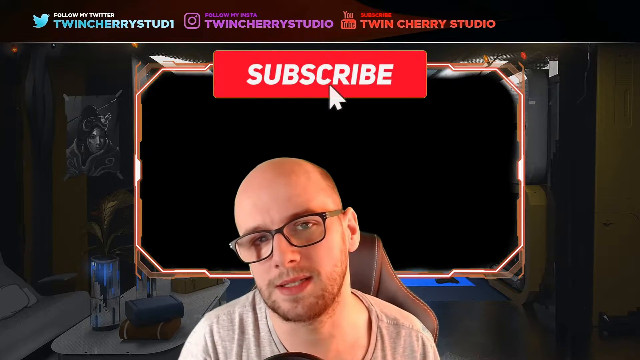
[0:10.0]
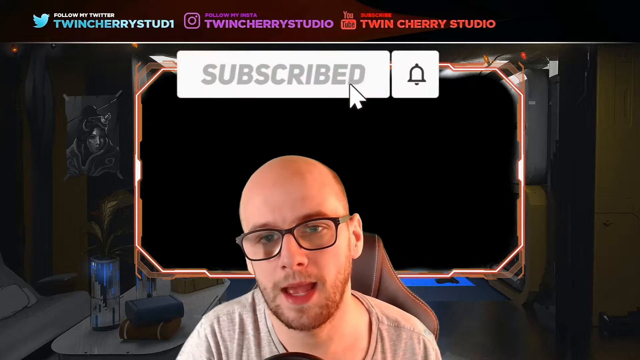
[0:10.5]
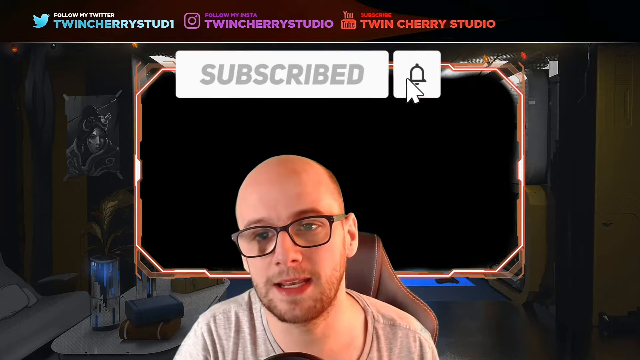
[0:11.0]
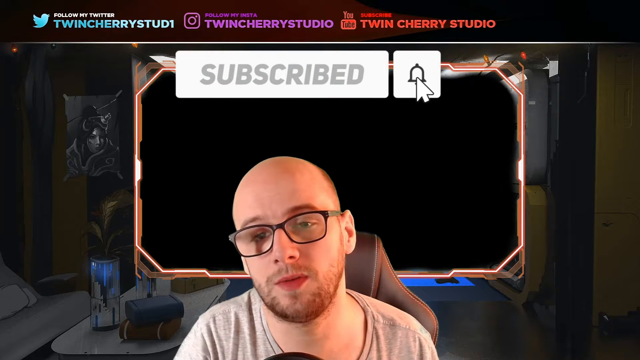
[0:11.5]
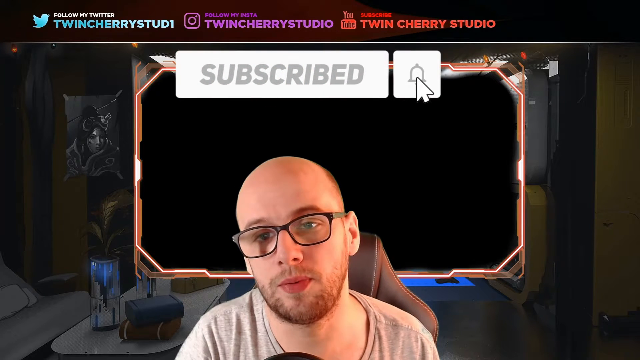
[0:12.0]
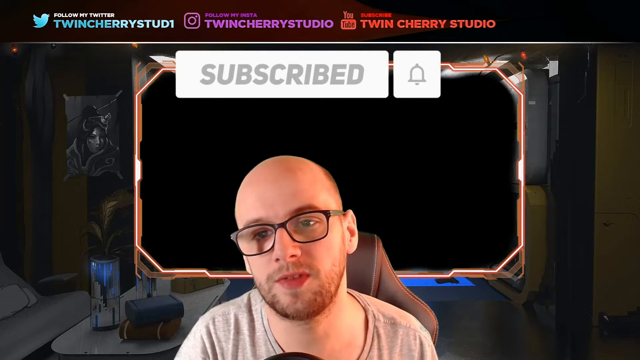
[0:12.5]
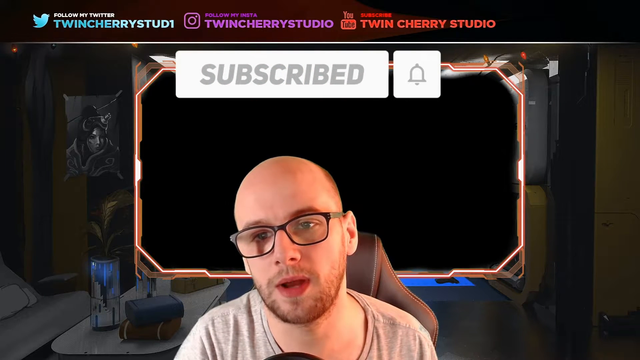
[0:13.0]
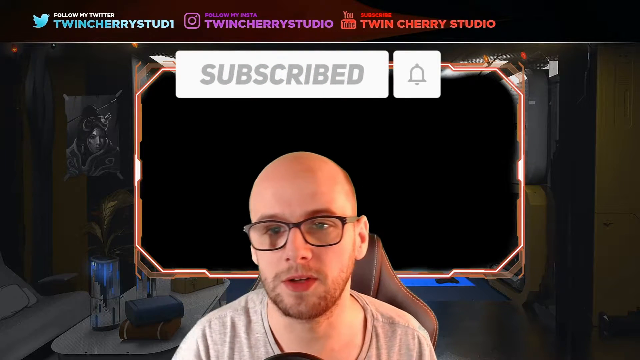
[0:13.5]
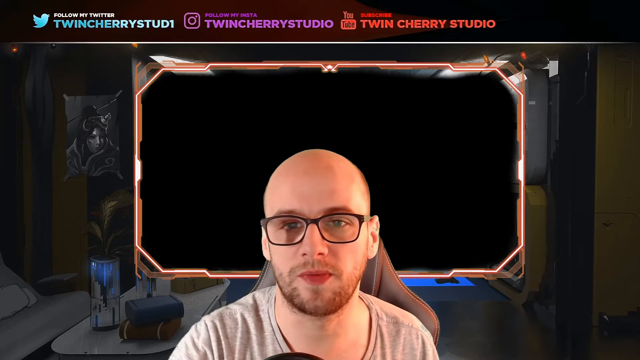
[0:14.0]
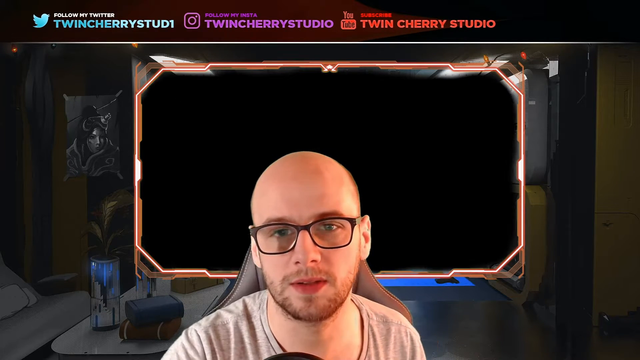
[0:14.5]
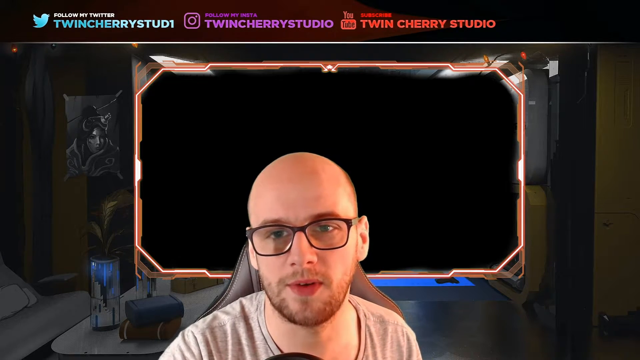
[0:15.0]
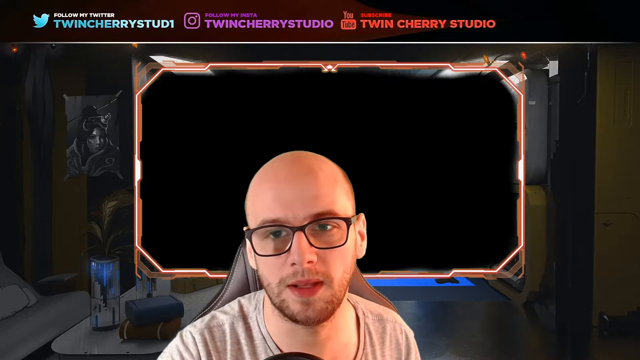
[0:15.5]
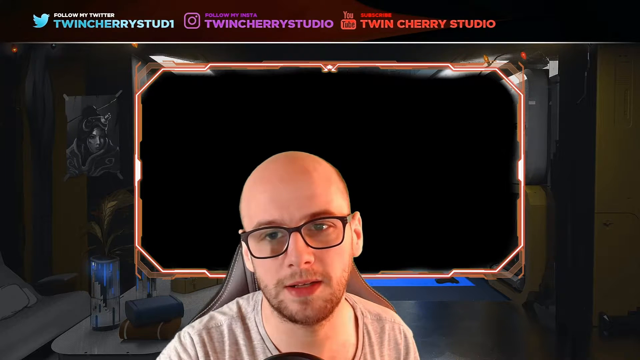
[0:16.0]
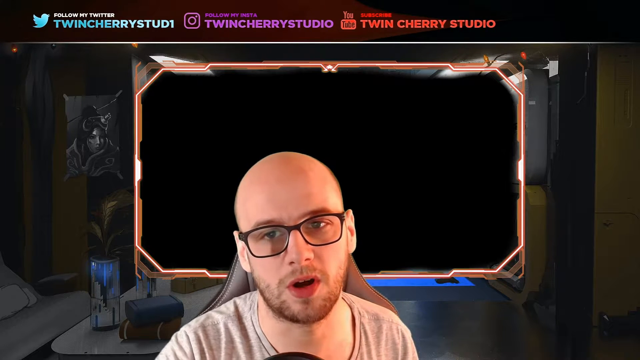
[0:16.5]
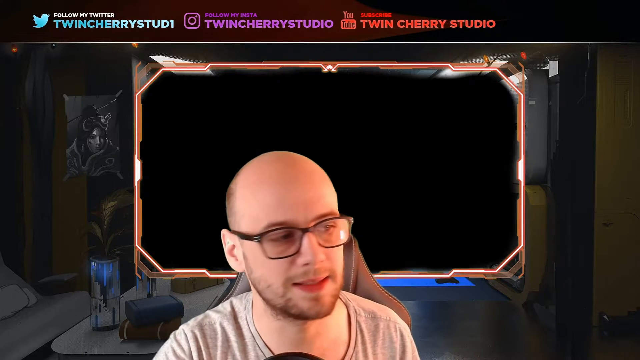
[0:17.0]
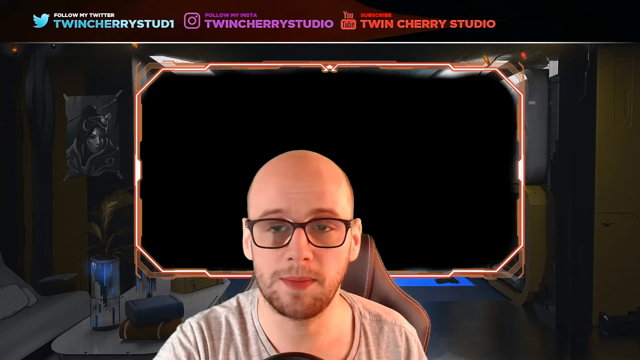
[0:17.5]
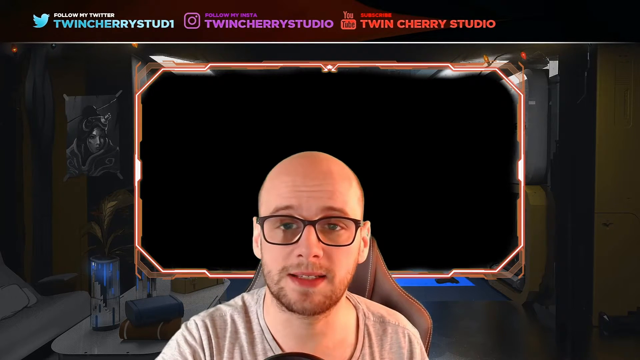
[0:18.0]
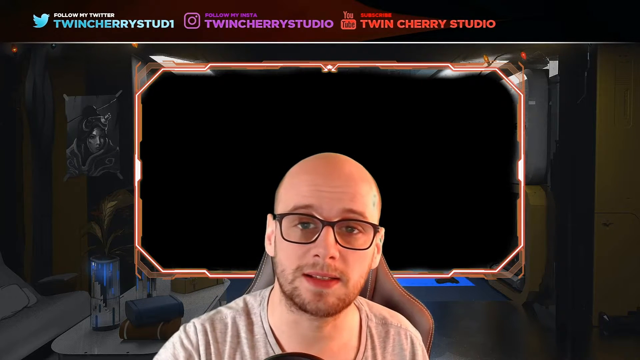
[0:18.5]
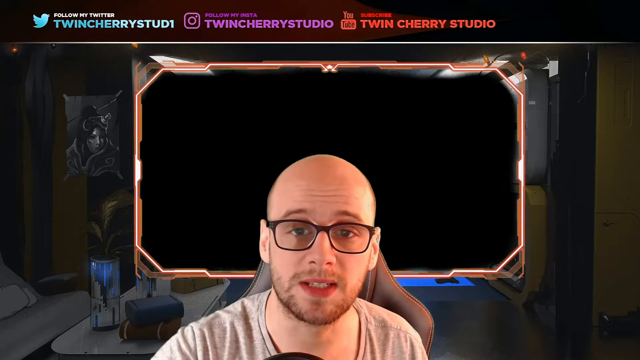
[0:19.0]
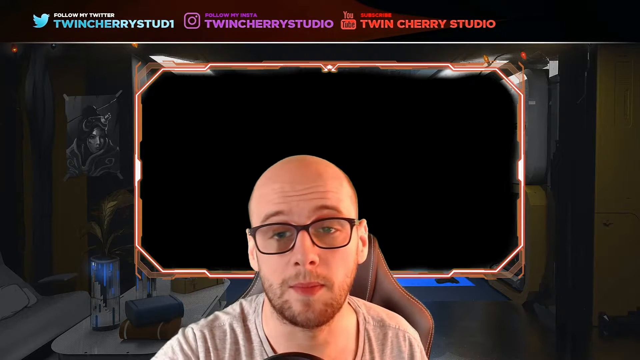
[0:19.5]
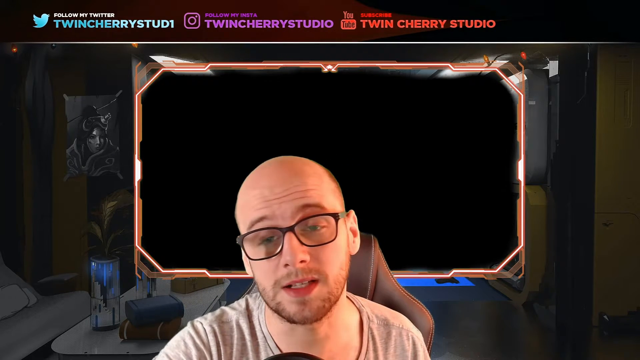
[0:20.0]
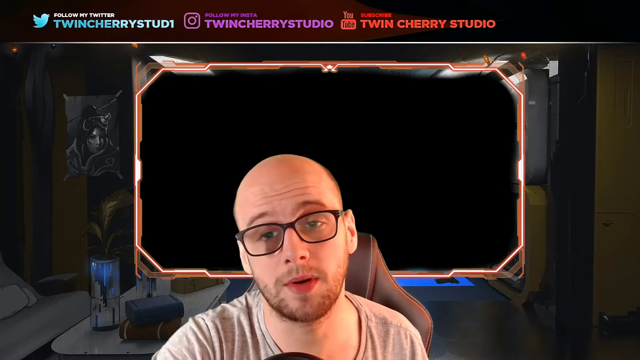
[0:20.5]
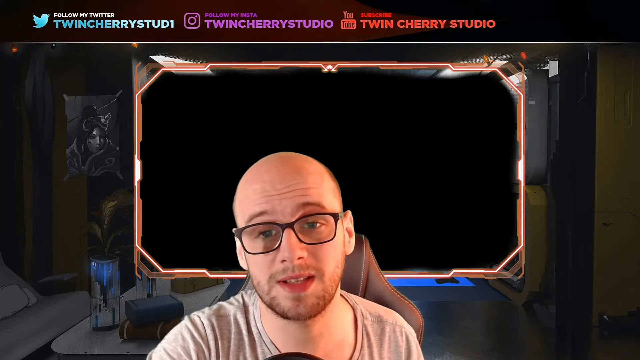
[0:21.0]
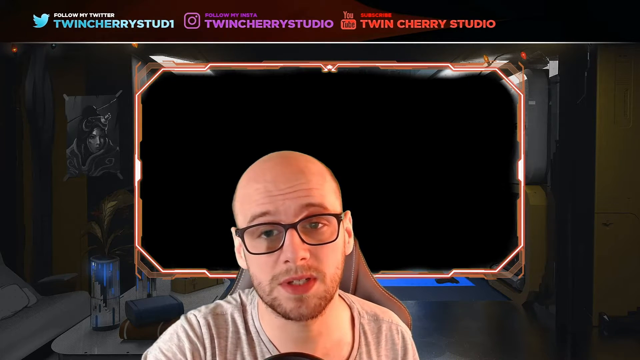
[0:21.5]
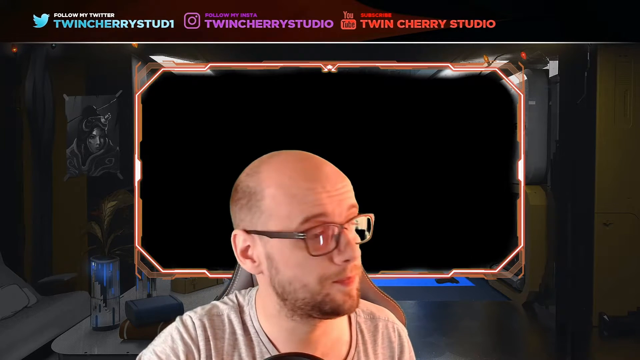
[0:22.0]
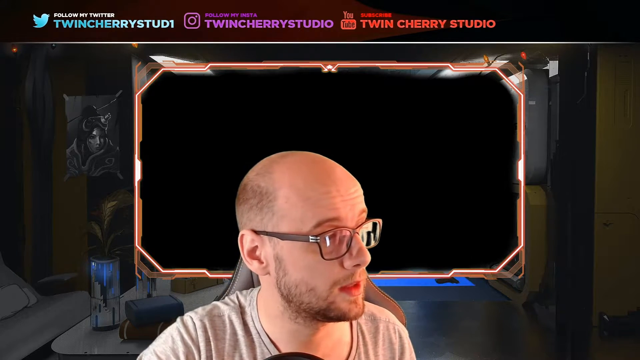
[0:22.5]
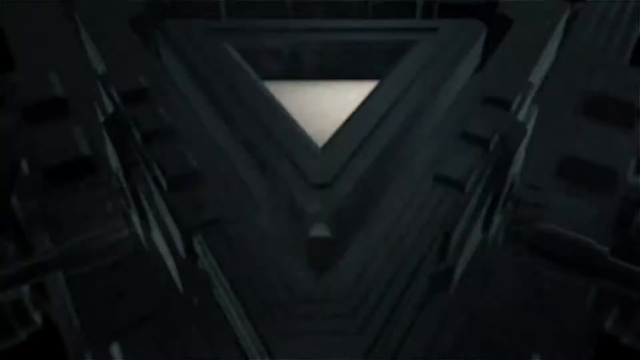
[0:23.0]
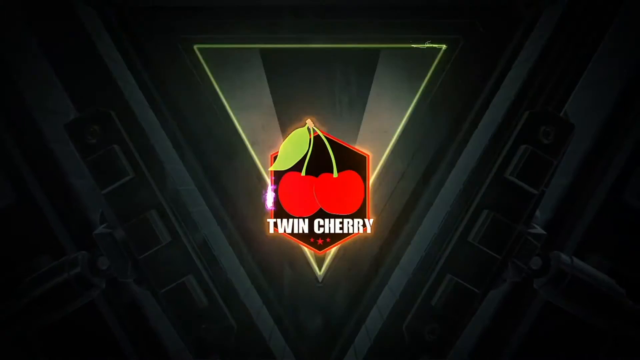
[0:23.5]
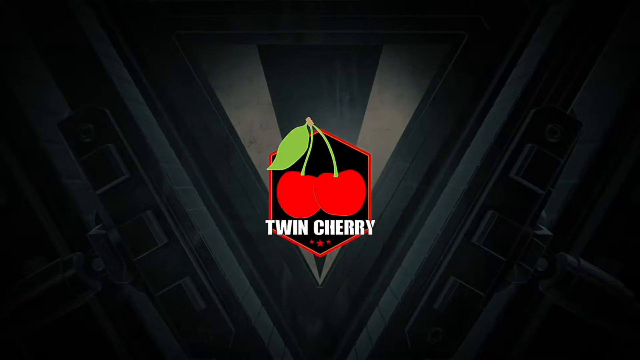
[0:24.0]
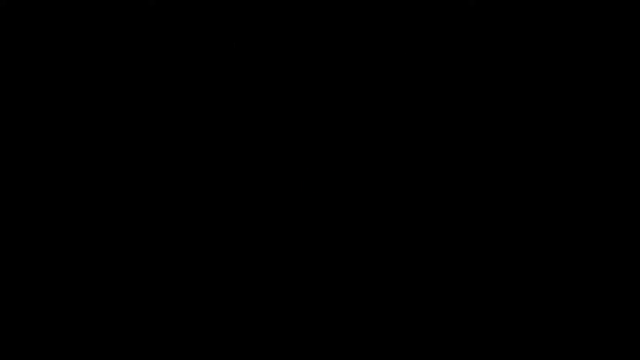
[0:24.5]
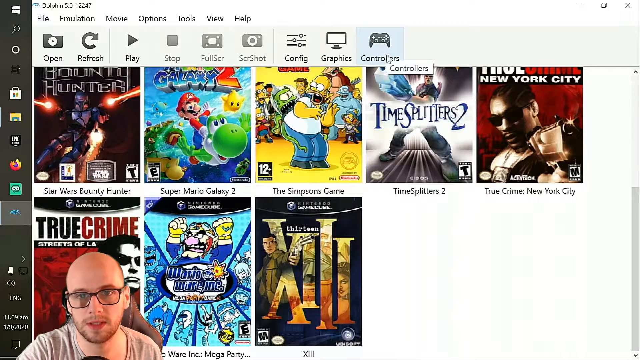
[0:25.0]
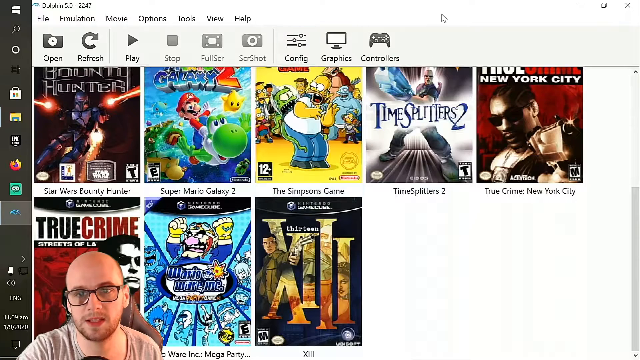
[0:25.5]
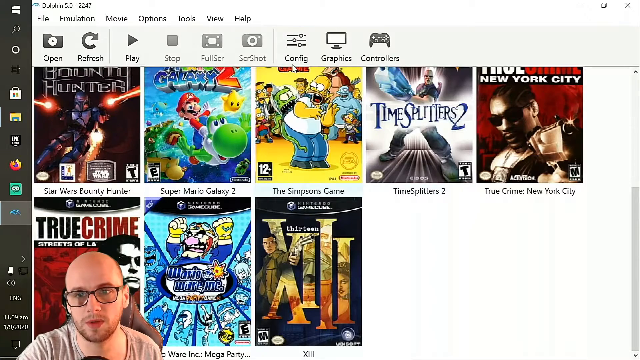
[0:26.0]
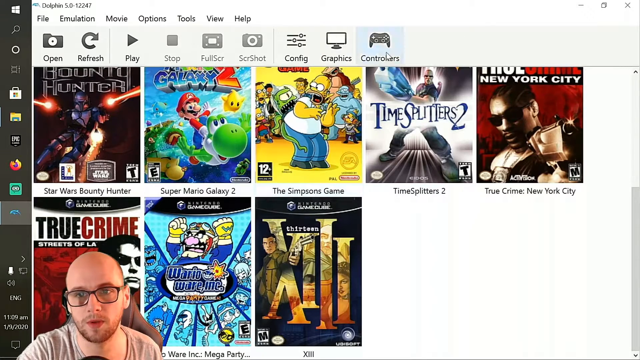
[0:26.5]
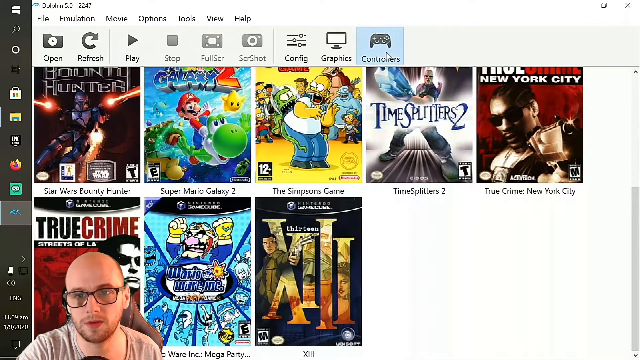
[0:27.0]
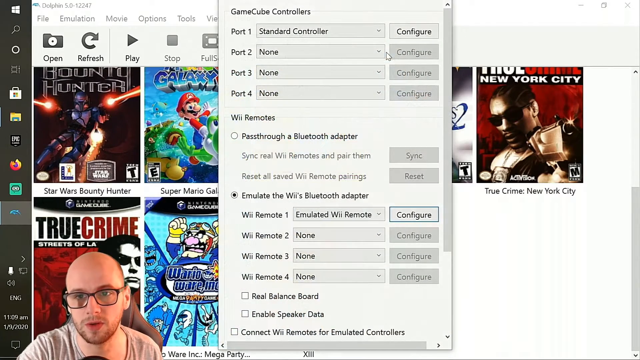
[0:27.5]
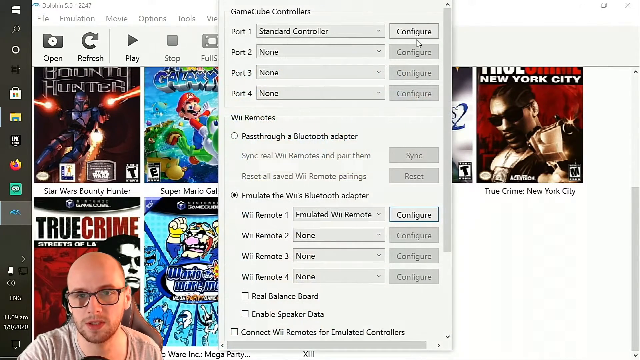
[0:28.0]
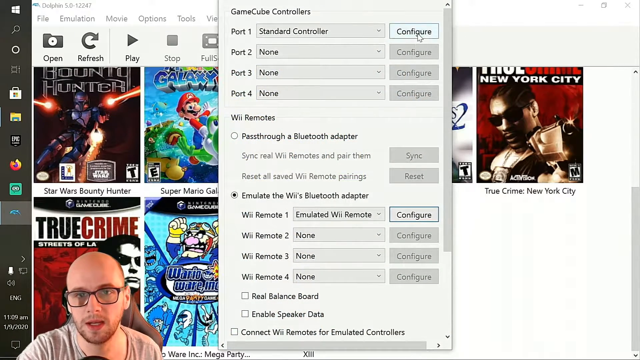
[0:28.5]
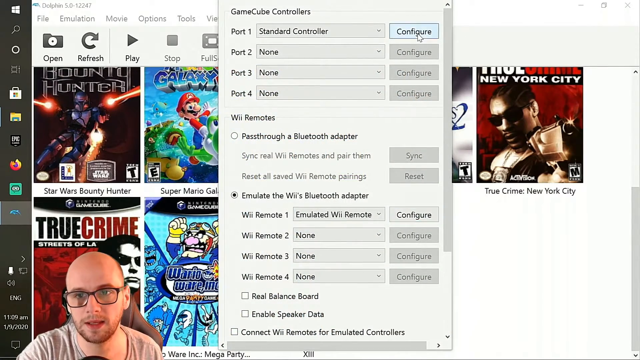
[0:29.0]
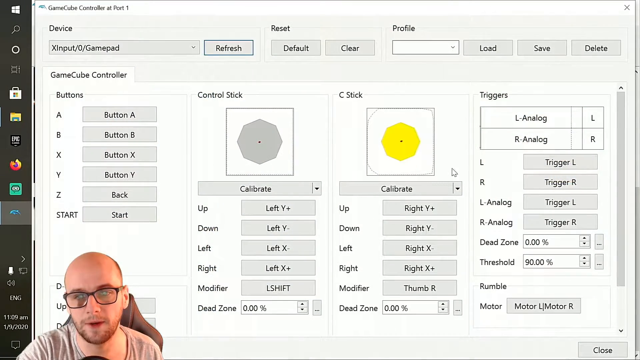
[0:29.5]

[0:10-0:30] A bald Caucasian man wearing glasses is in the middle of the frame, talking. The word "subscribe" appears above his head, then changes to "subscribed", and someone clicks on a bell with a cursor. In the middle of the screen, two cherries with one leaf come up along with the words "TWIN CHERRY" in all capital letters. The view then goes to his page, which shows different videos he has posted, with titles including "bounty hunter", "galaxy 2", "the Simpsons", "time splitters 2", "New York City", "true crime Streets of LA", "Mario Wario" and "13". He moves his cursor to the top of the page and clicks on a word that brings up a whole box, then uses it to move the cursor to the next area he wants to click on.